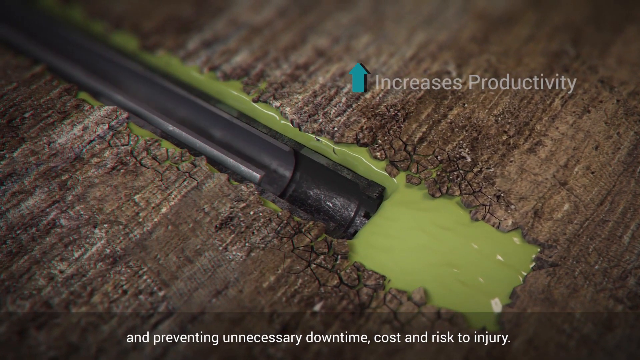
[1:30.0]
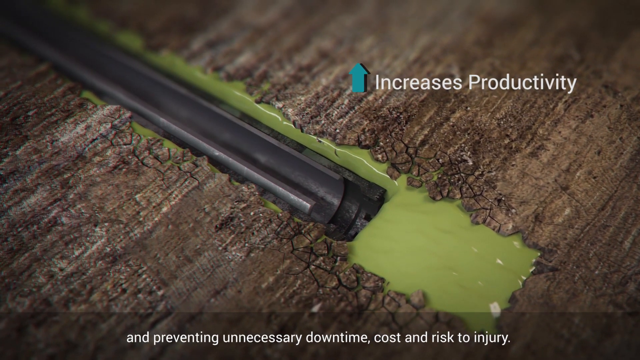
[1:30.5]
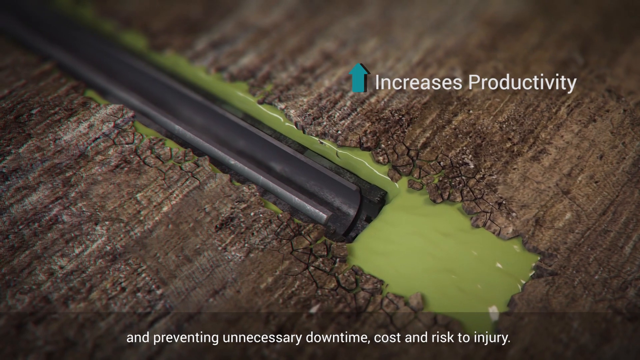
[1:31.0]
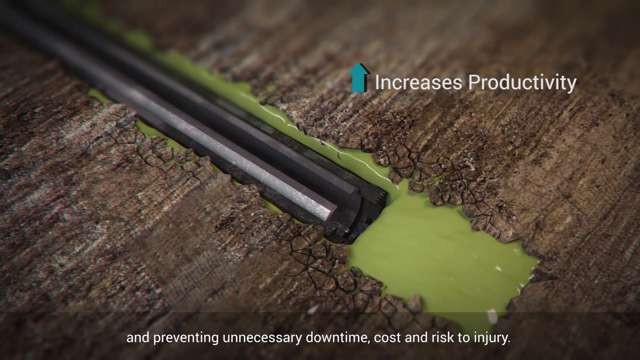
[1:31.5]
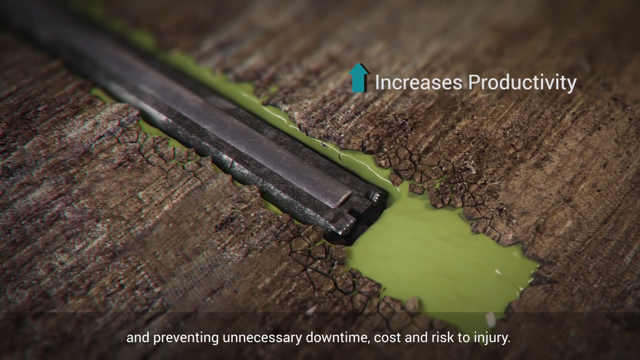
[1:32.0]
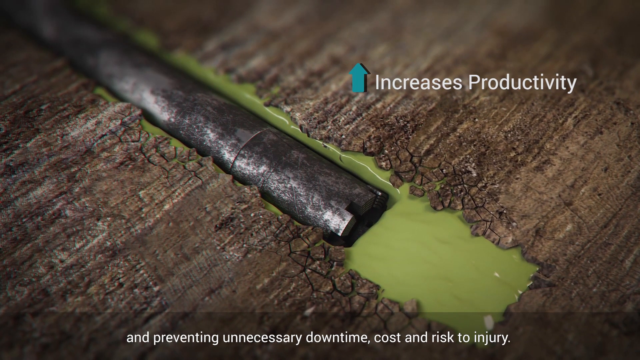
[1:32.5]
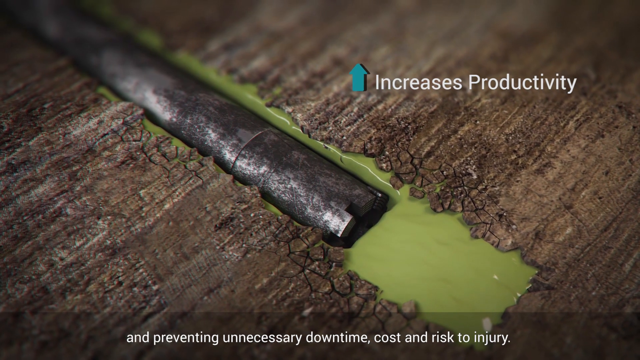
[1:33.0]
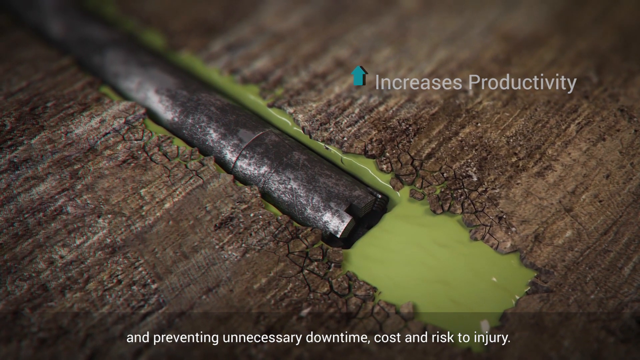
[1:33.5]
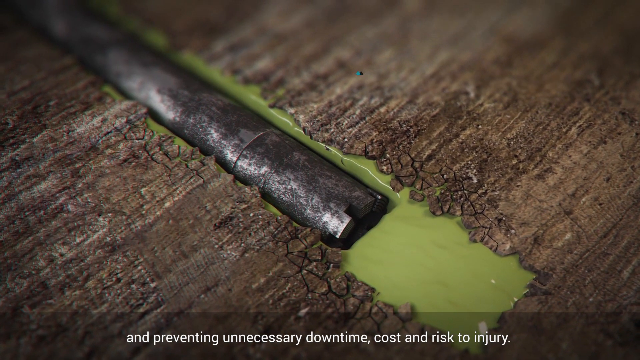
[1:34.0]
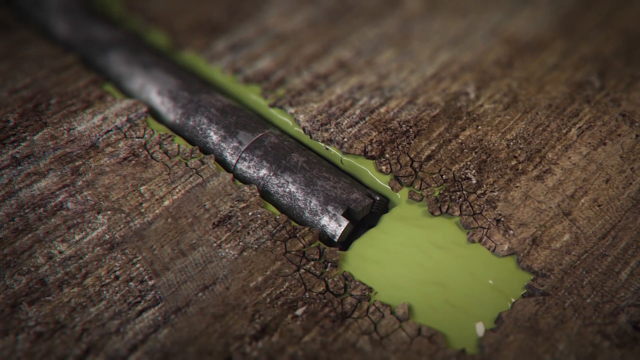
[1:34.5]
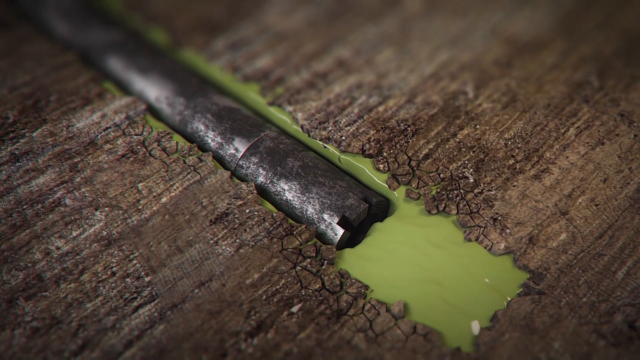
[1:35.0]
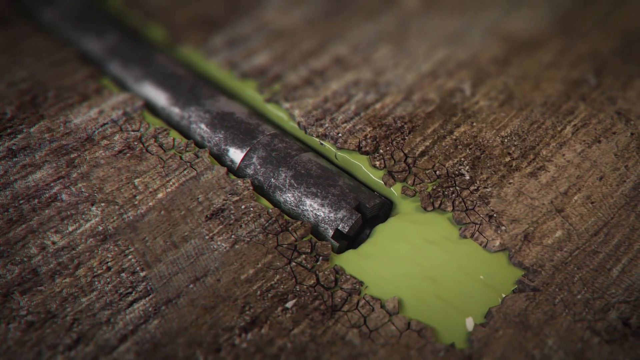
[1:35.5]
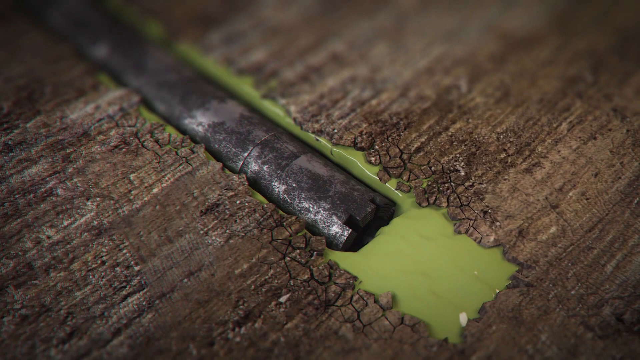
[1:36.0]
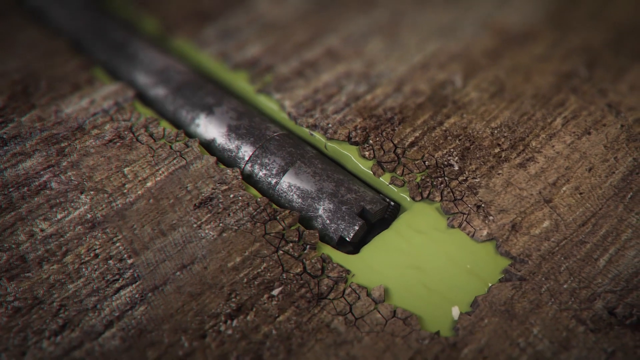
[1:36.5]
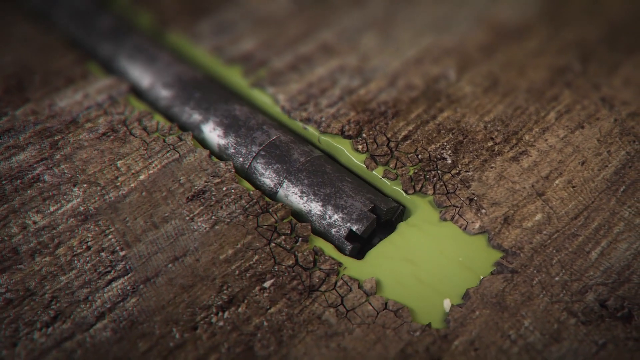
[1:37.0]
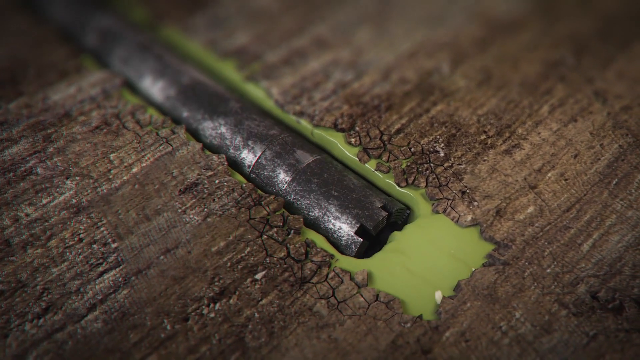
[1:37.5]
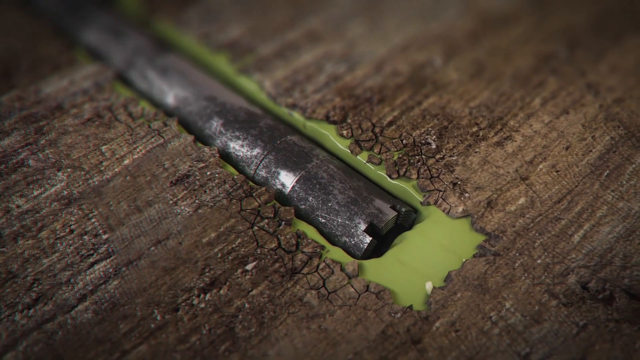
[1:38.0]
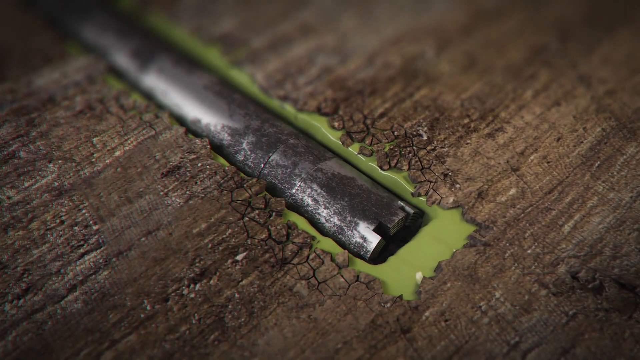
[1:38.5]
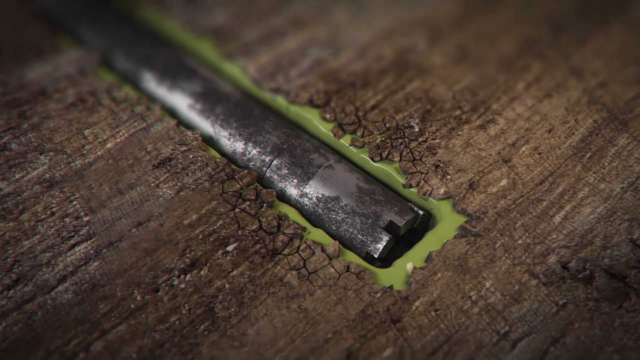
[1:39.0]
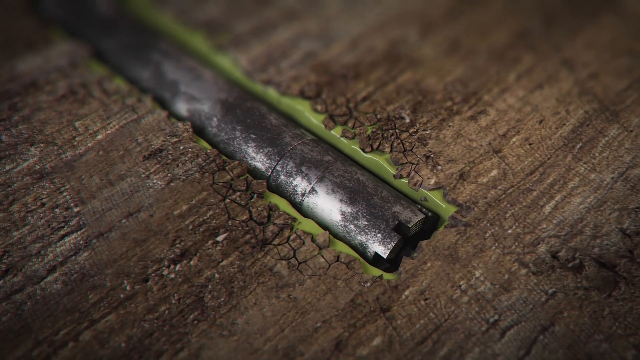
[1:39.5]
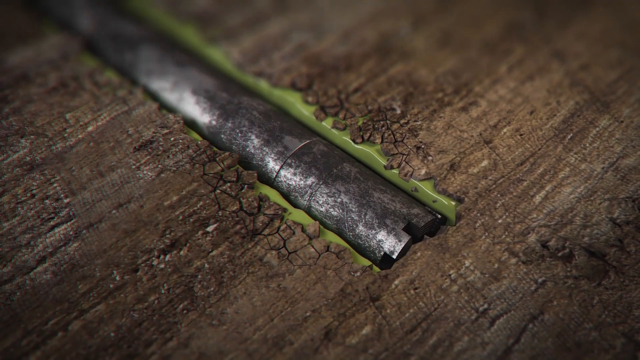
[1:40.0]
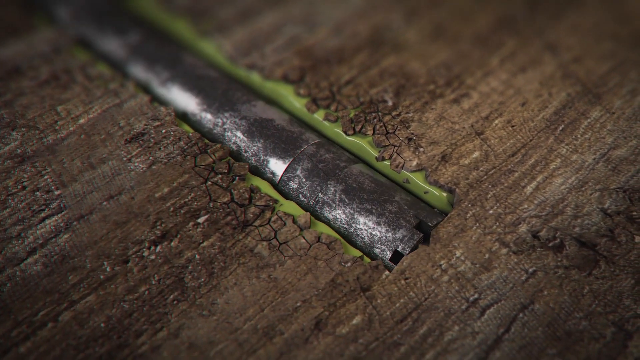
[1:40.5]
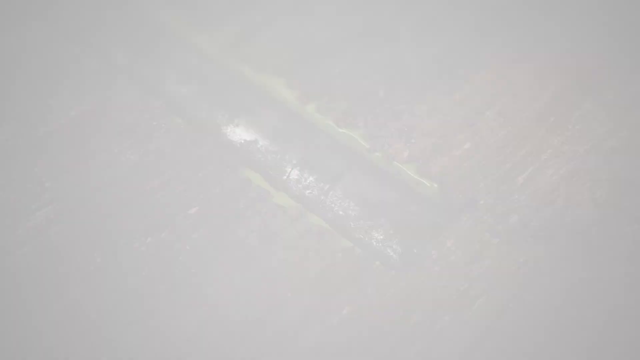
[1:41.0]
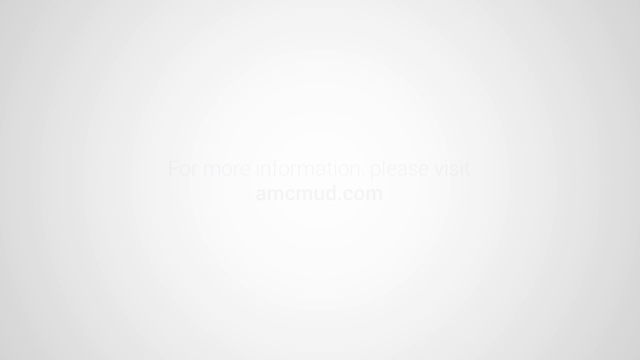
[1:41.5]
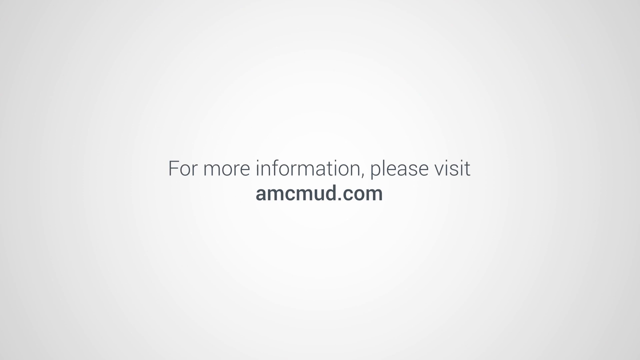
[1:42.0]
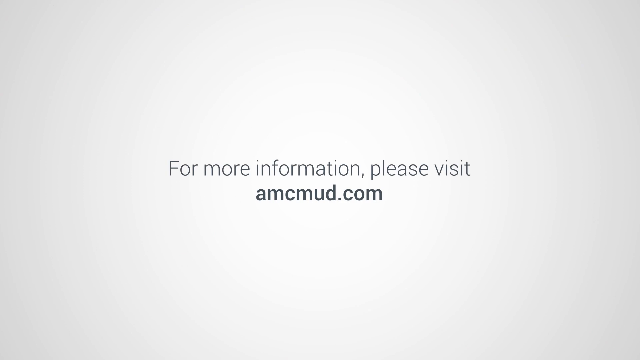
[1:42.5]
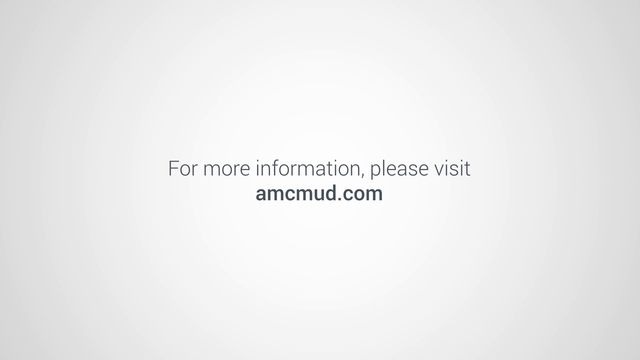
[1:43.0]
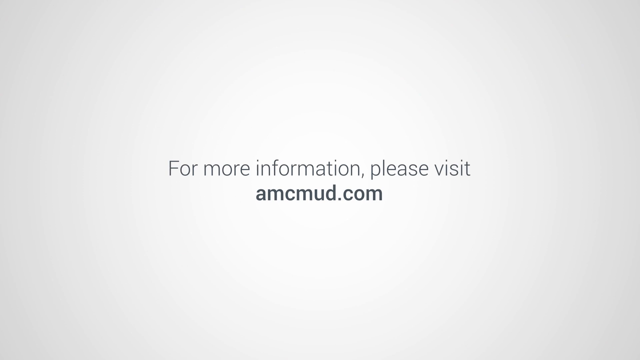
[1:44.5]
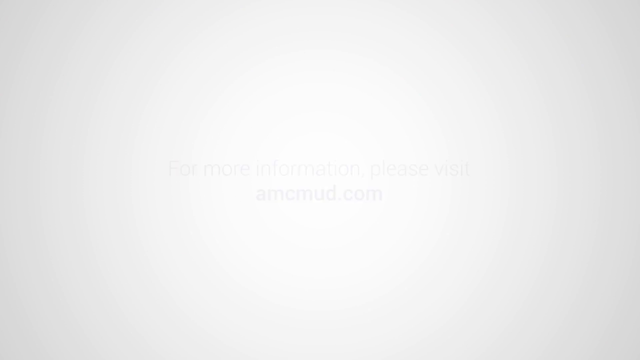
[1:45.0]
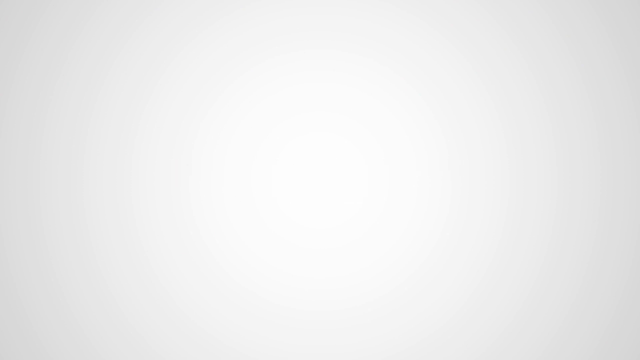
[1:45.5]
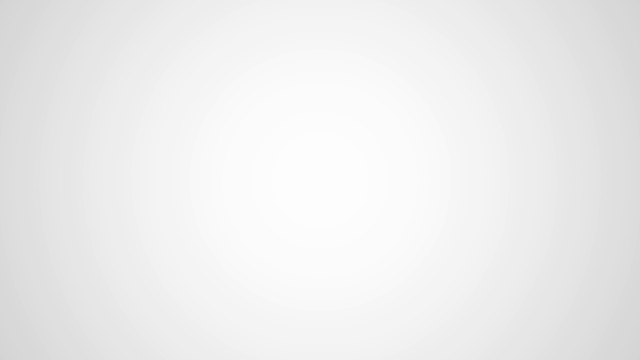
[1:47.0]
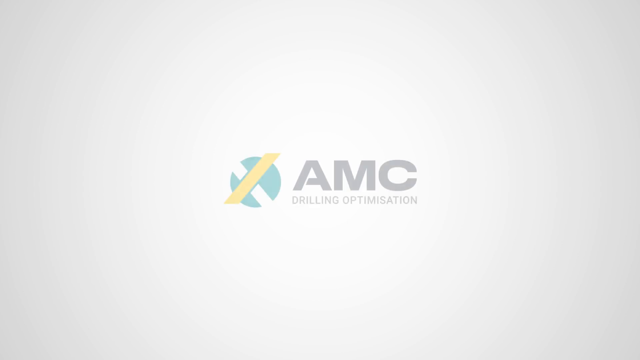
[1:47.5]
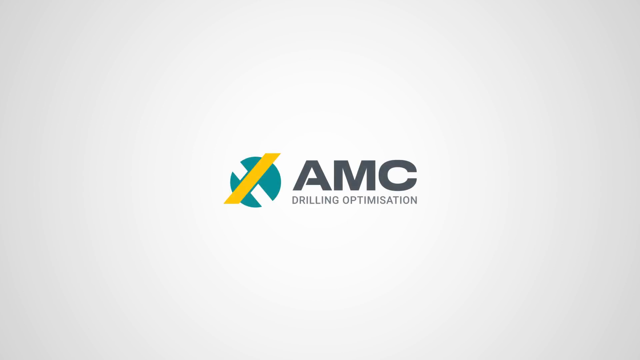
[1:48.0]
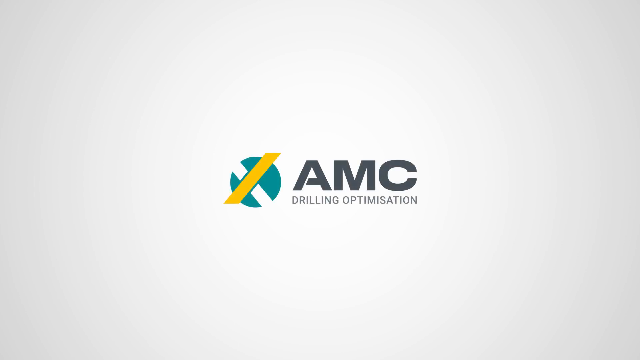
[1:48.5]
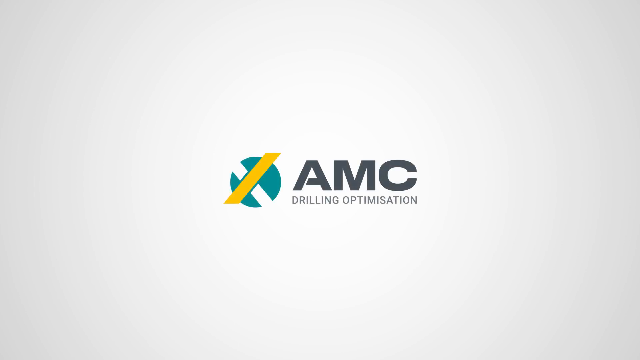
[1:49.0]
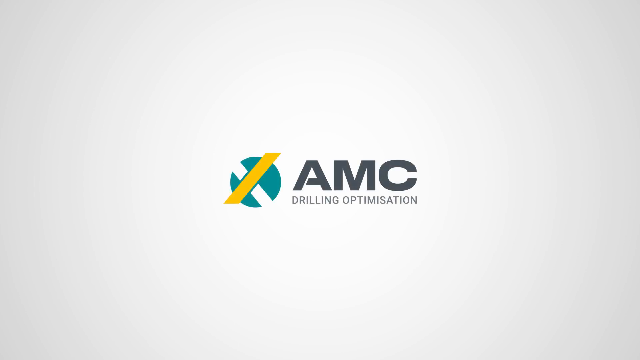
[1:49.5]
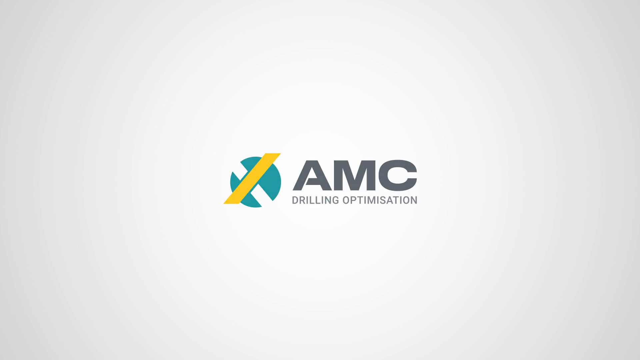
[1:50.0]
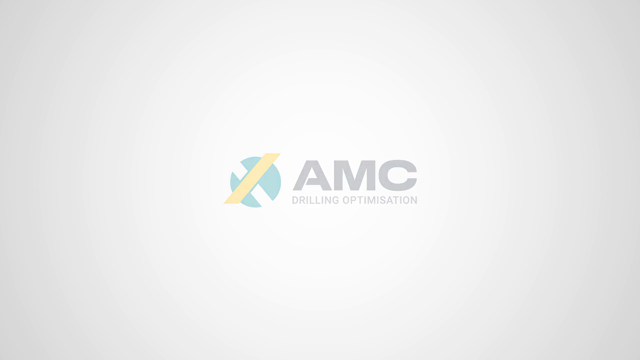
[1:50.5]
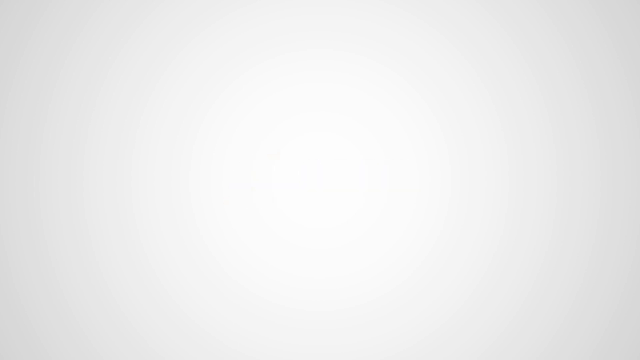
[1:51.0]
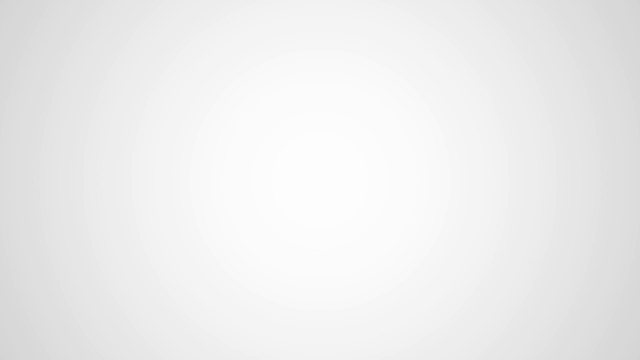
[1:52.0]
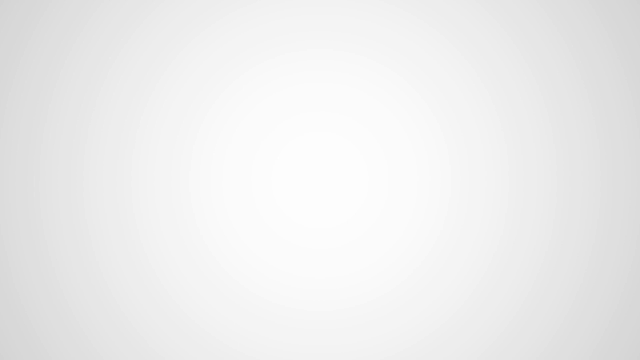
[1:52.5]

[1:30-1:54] The drill bit goes through the green substance that was just put down and continues drilling forward. The polymer filling looks like it may have been used to stabilize the drilled hole so drilling can continue in the same area without the hole collapsing. The polymer laid down is also shown to dry fairly quickly. The video is credited to AMC Drilling, and additional information is given at amcmud.com.